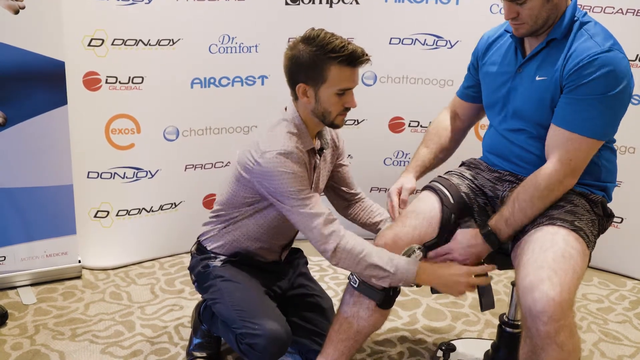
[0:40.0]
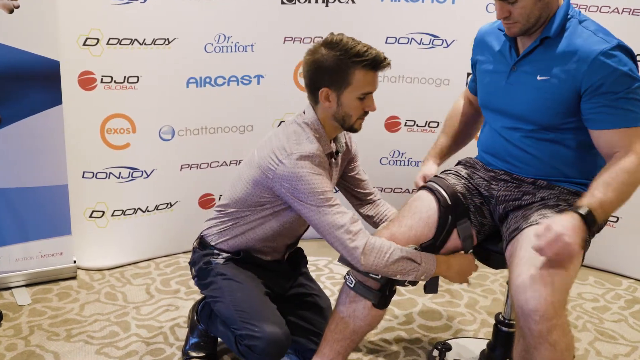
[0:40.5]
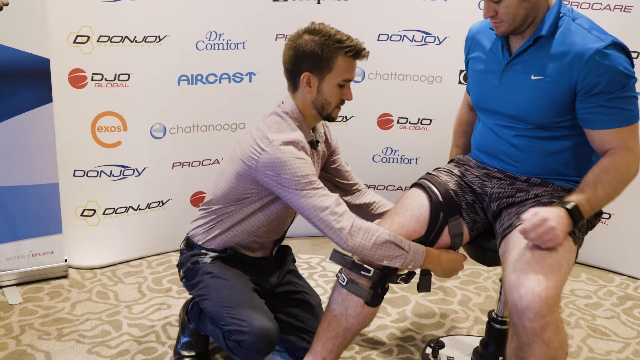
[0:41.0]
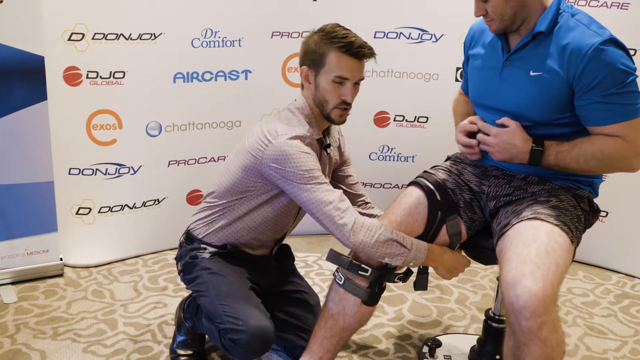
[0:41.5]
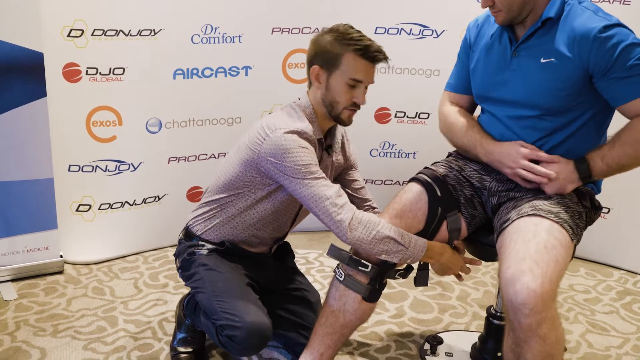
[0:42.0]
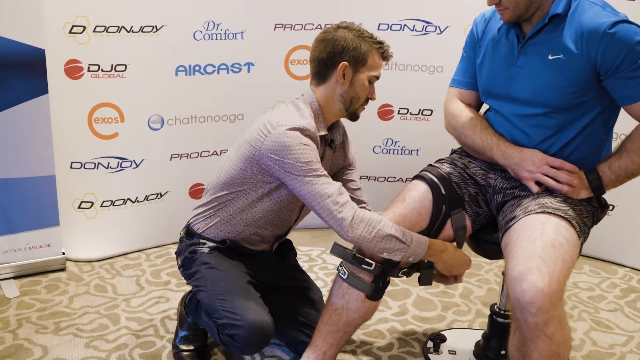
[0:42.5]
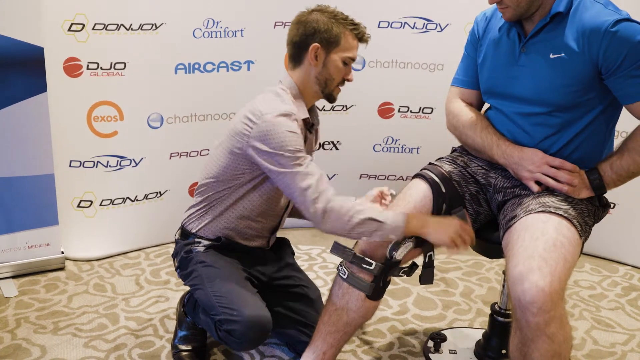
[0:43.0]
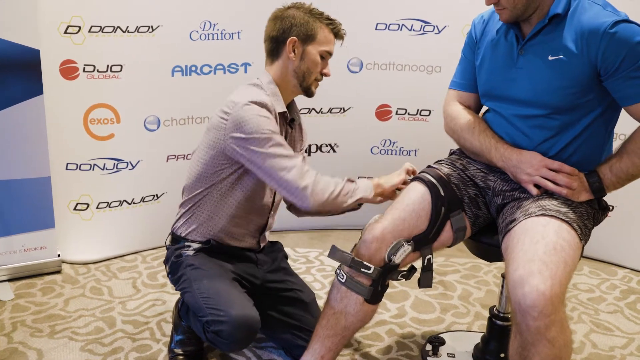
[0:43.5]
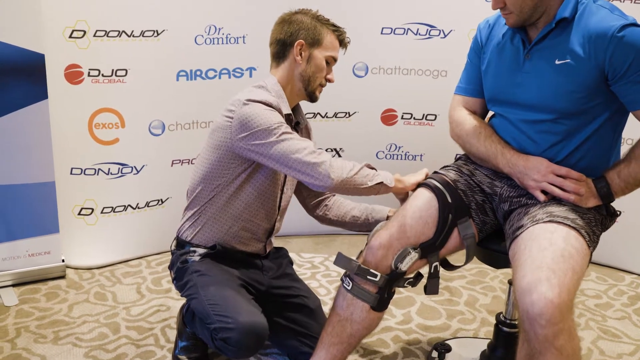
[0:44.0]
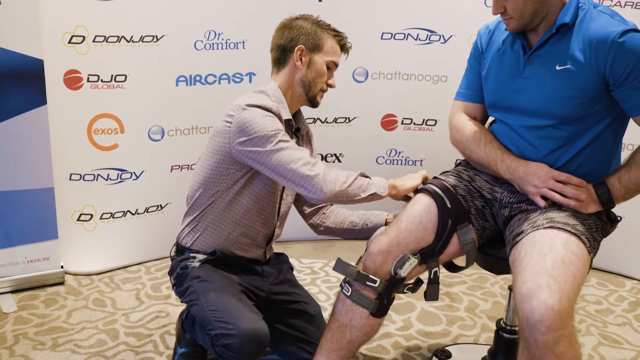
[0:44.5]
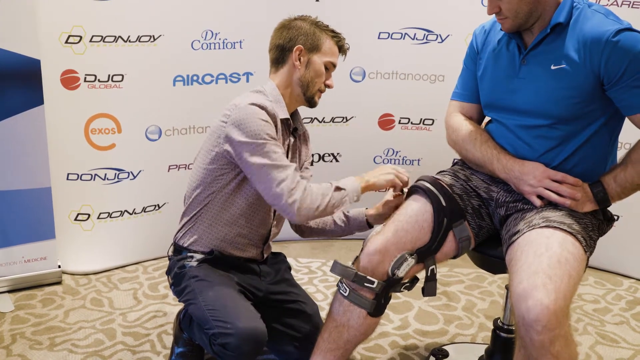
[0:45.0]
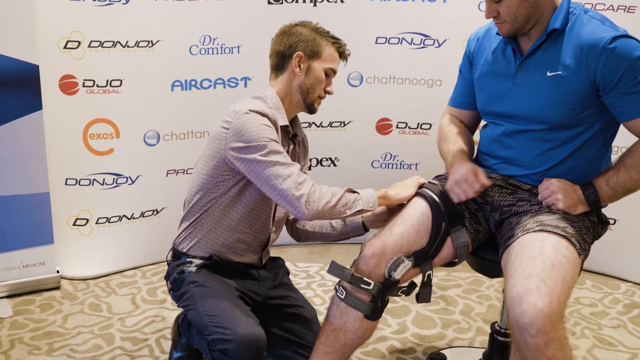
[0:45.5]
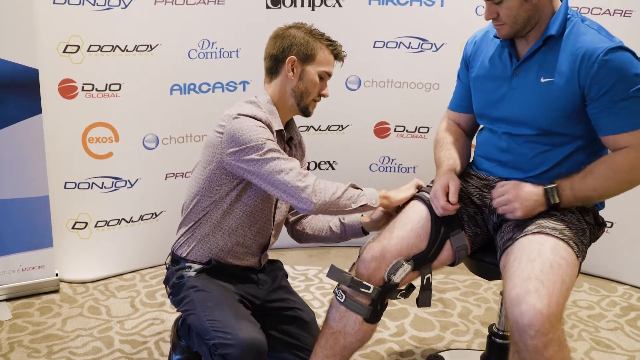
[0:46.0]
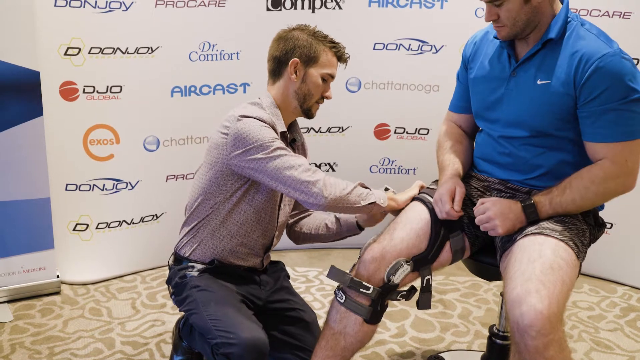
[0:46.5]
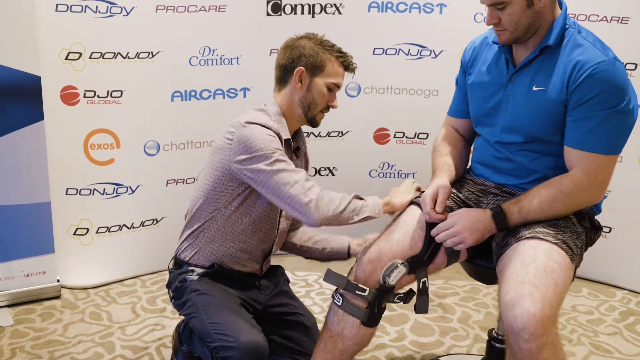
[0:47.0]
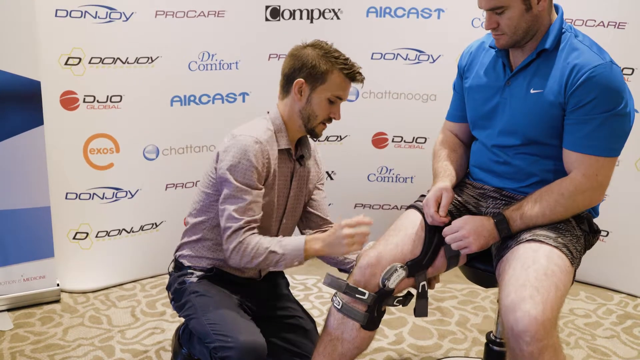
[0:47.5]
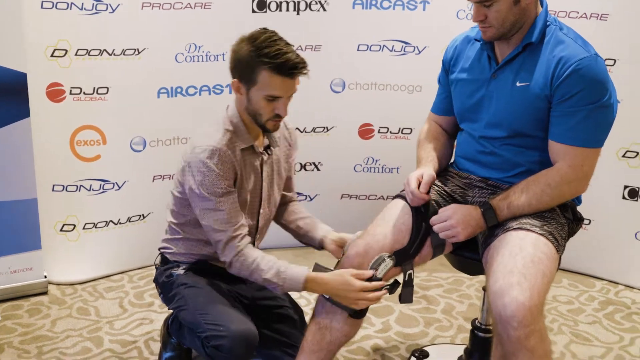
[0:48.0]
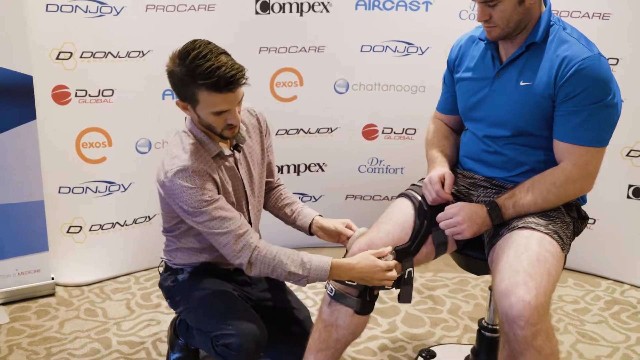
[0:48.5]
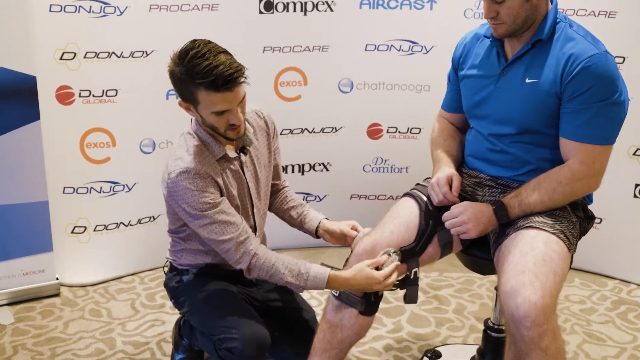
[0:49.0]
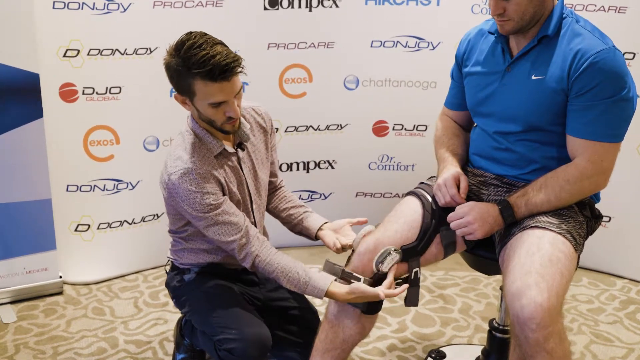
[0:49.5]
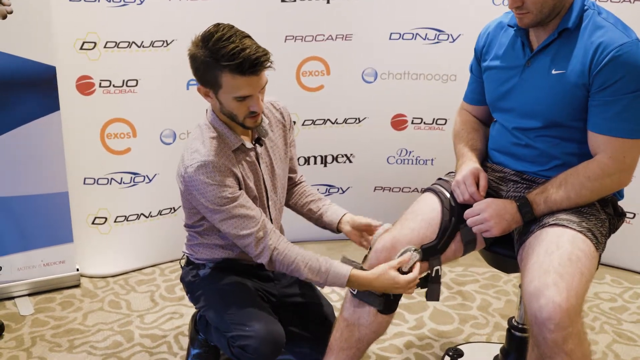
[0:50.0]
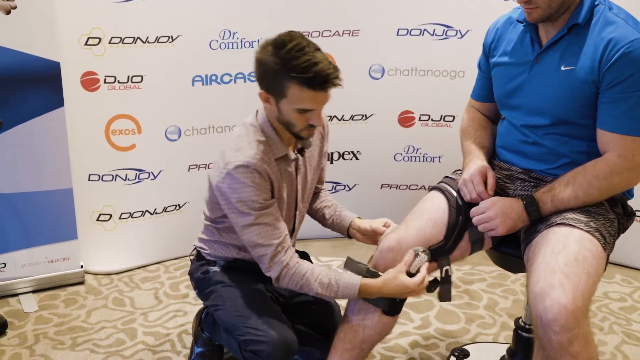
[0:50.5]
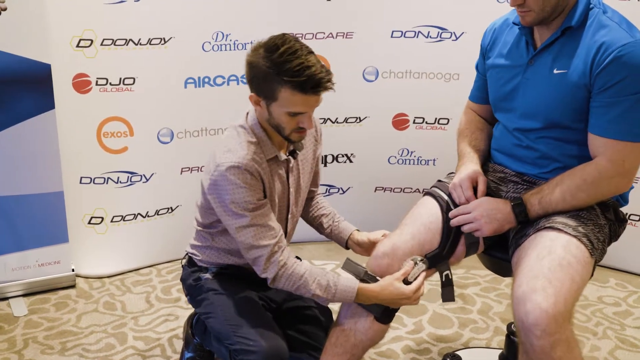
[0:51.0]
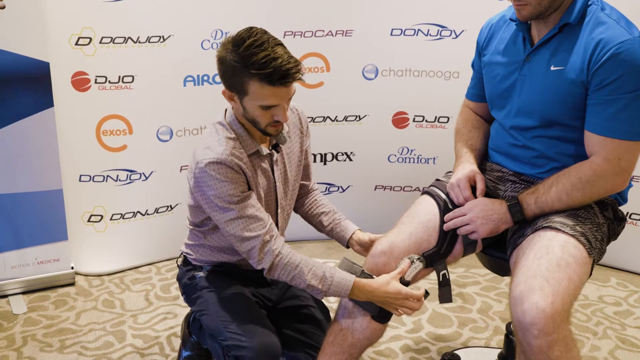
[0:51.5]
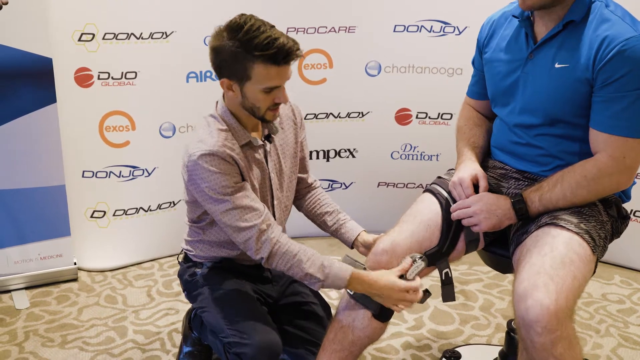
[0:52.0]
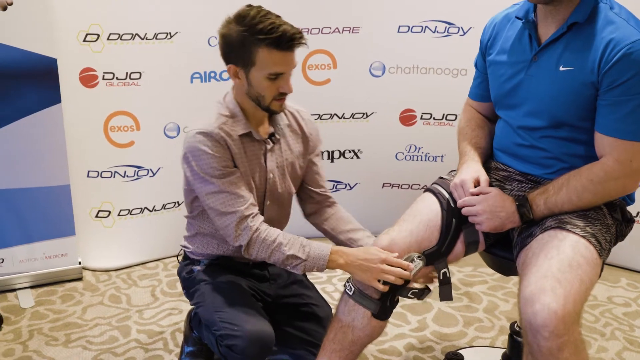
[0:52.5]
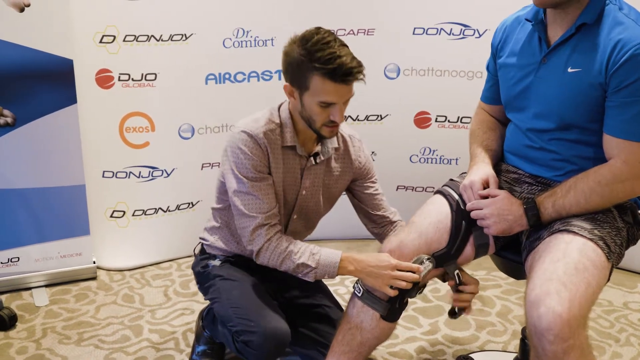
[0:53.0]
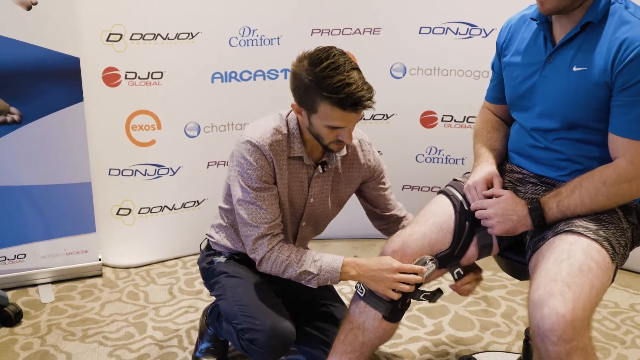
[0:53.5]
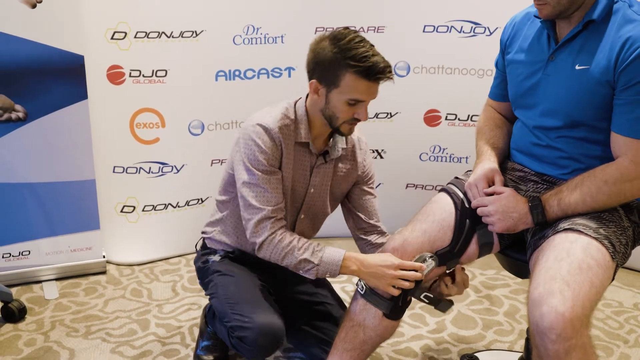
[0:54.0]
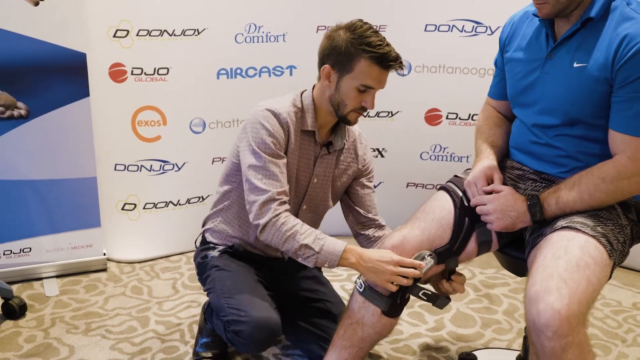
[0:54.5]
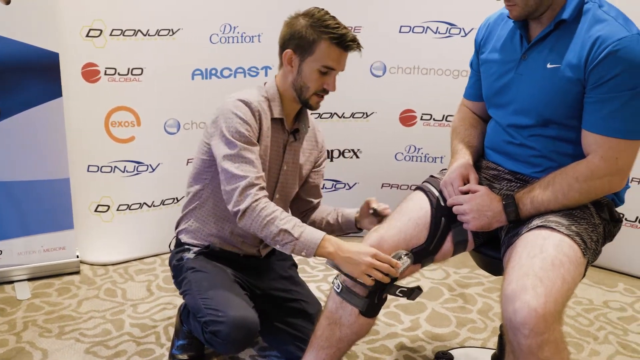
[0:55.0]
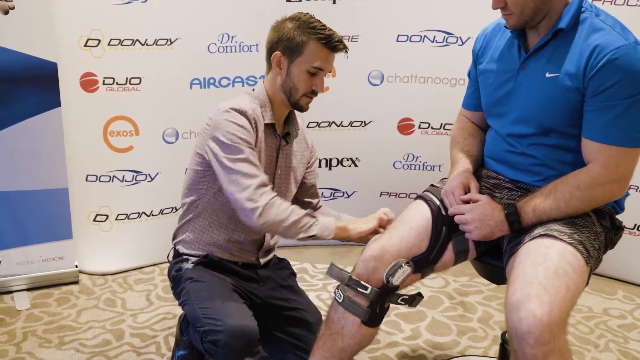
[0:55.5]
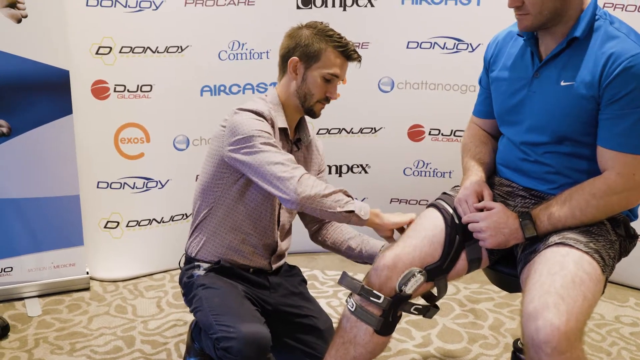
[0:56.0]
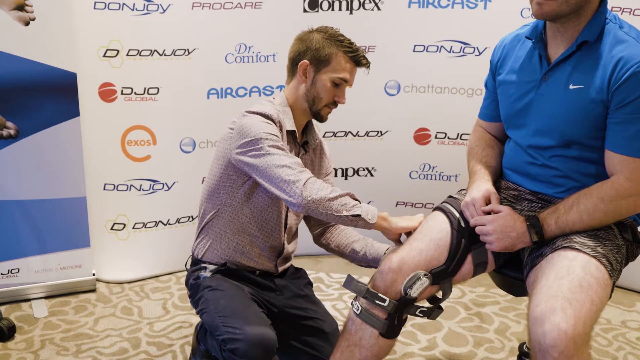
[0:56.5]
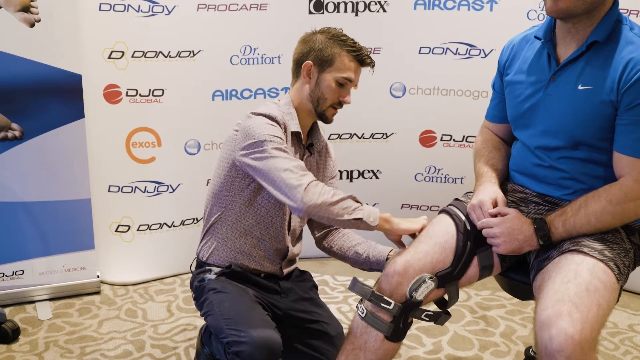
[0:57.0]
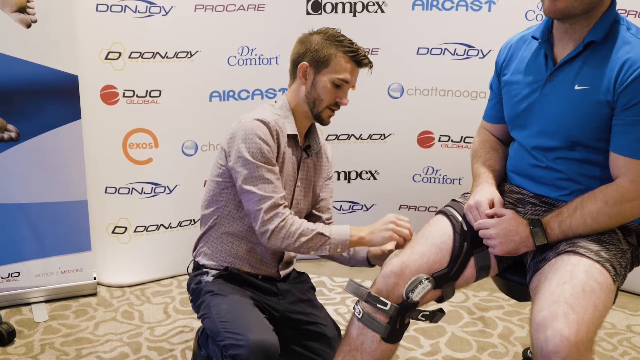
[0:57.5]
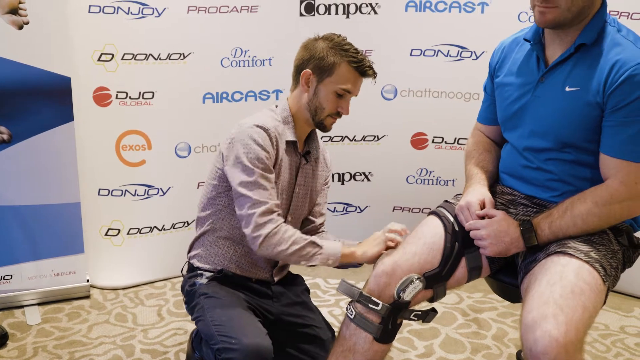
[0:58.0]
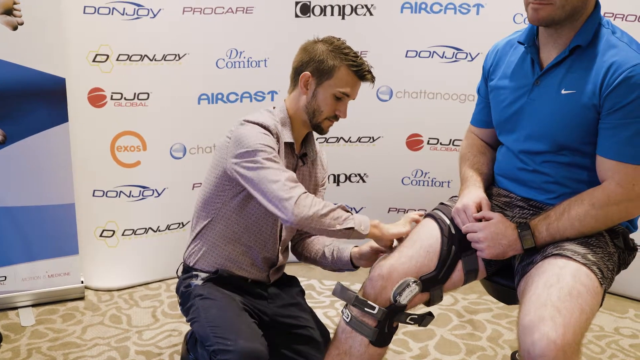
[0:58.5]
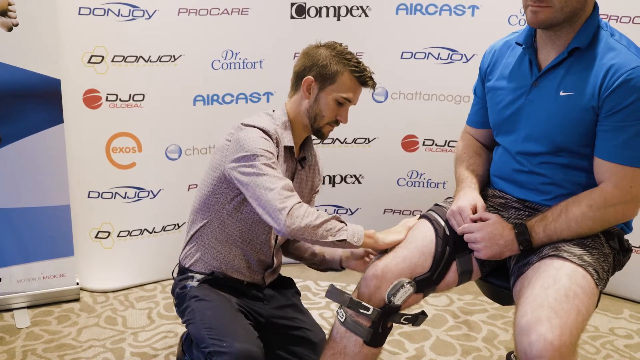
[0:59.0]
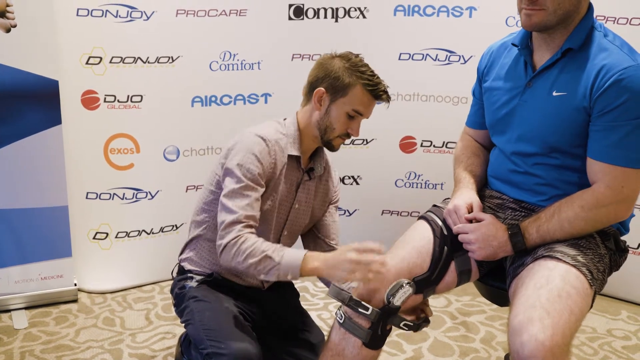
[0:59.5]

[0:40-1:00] The demonstration continues as one man helps another strap up the black brace covering his knee and thigh. The man sitting in a chair has the brace on his right leg, and the other man kneels next to his leg. The kneeling man takes the top strap, pulls it underneath the inner thigh, wraps it around the thigh and buckles it on the side of the outer thigh. He then takes the white, round pieces on the sides of the knee and appears to adjust them, pushing them down and making sure they are in place. He takes another strap near the thigh, pulls it under the inner thigh, wraps it under the leg and buckles it on a buckle on the outer thigh. The man in the blue shirt sits calmly on the chair with his hands on his lap. At one point someone seems to be talking to him, and he nods his head while the other man continues to fasten the buckles on the brace.